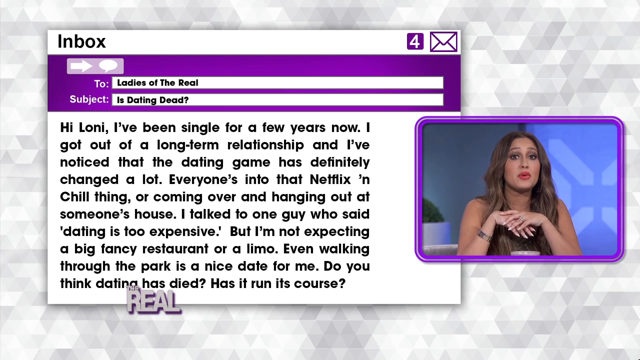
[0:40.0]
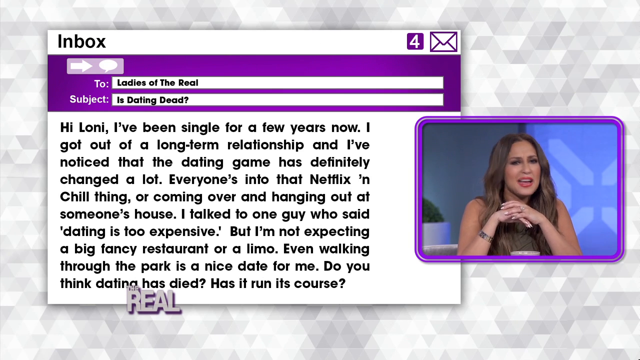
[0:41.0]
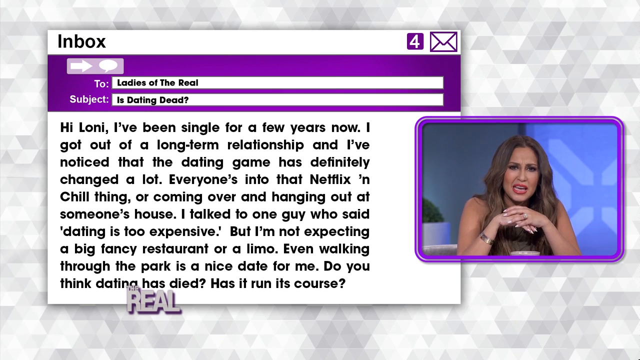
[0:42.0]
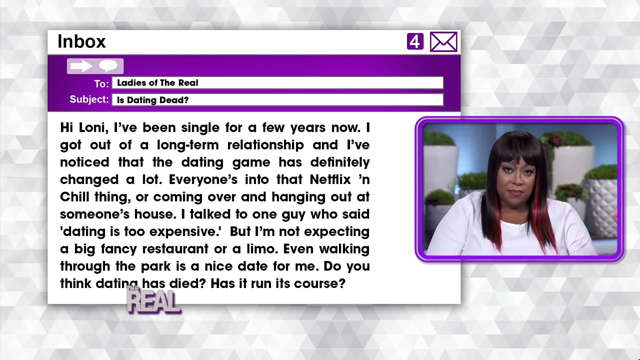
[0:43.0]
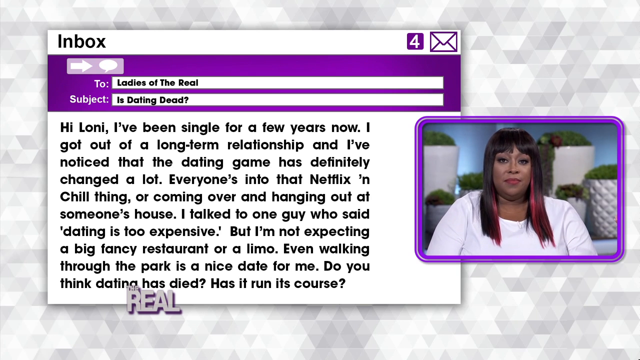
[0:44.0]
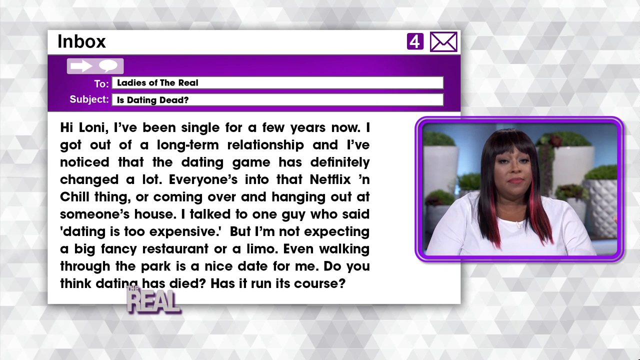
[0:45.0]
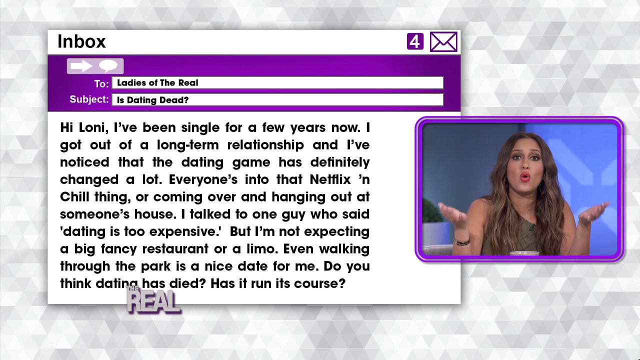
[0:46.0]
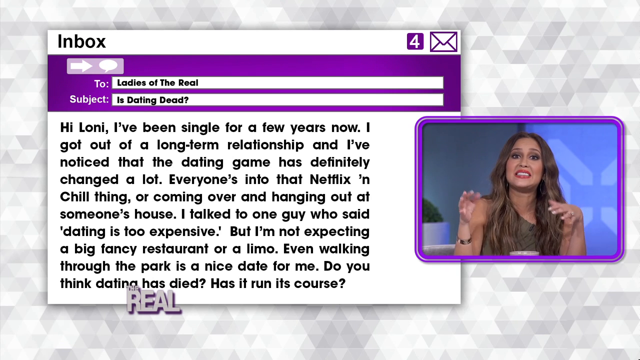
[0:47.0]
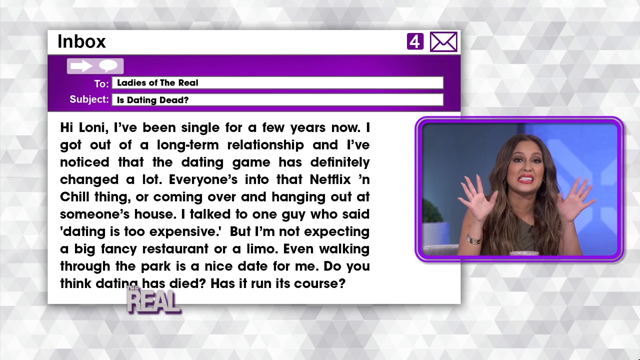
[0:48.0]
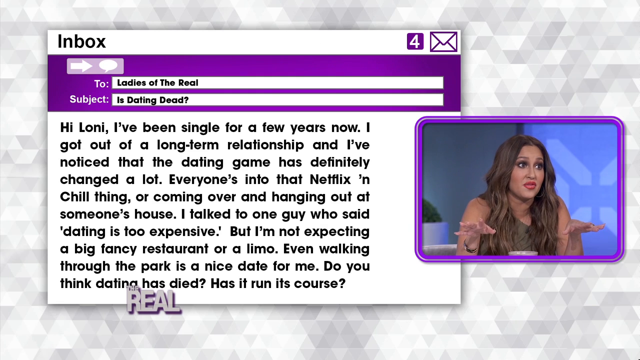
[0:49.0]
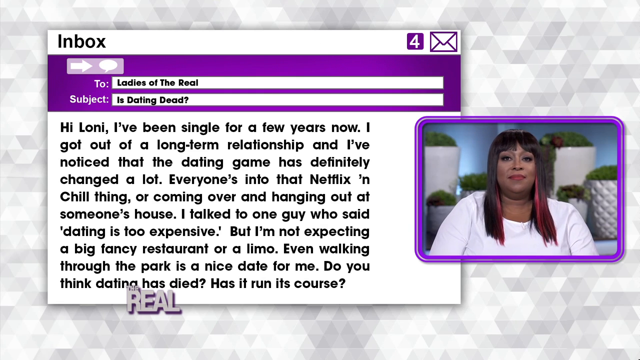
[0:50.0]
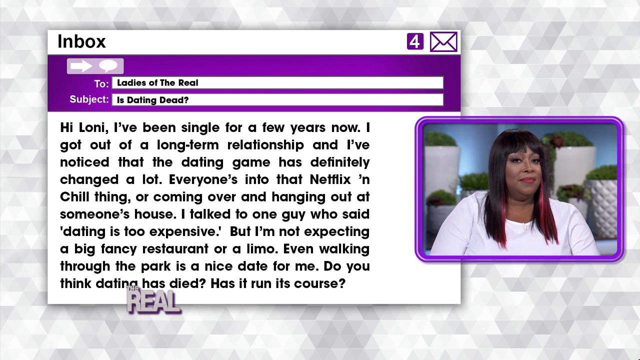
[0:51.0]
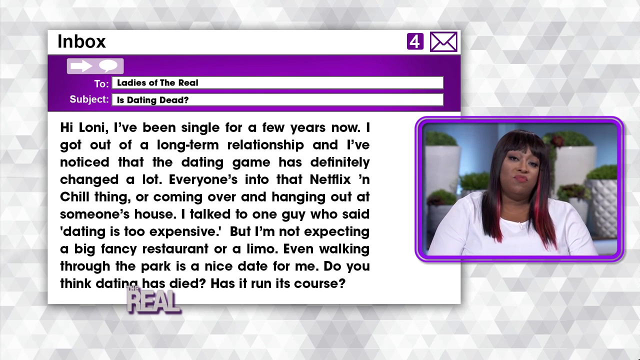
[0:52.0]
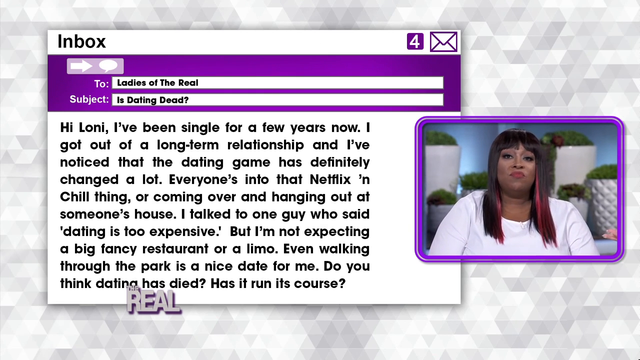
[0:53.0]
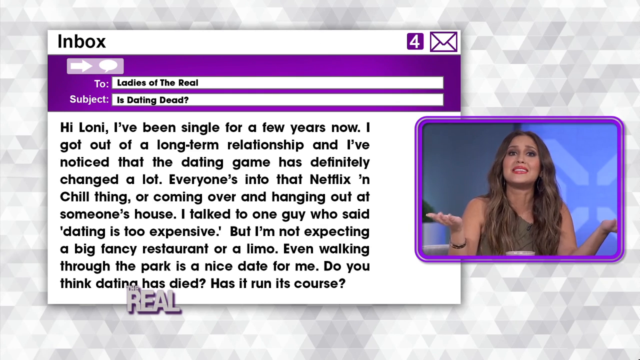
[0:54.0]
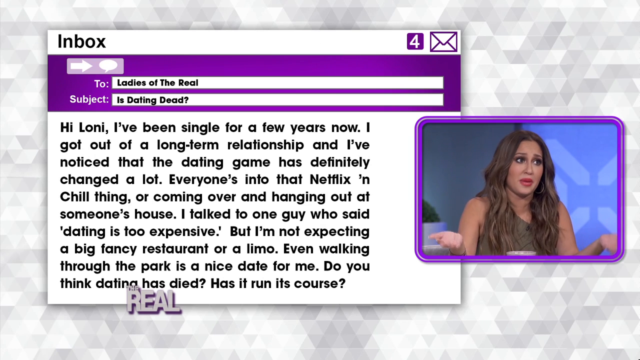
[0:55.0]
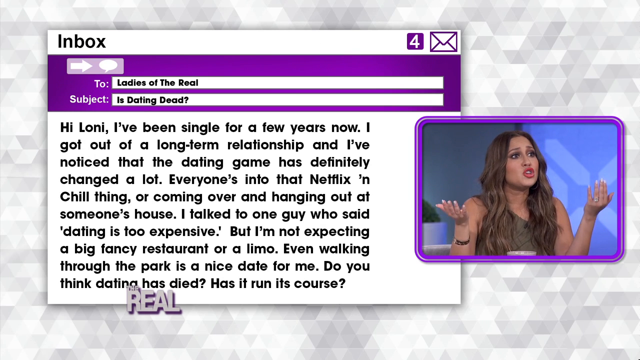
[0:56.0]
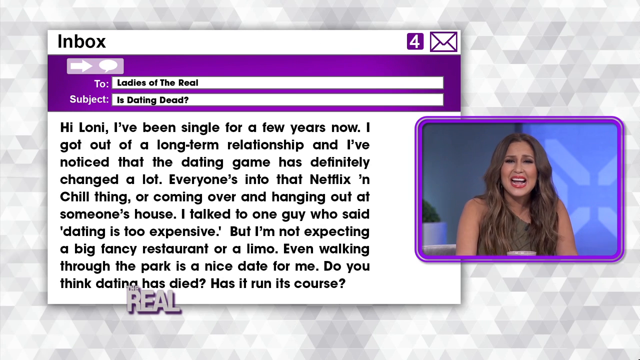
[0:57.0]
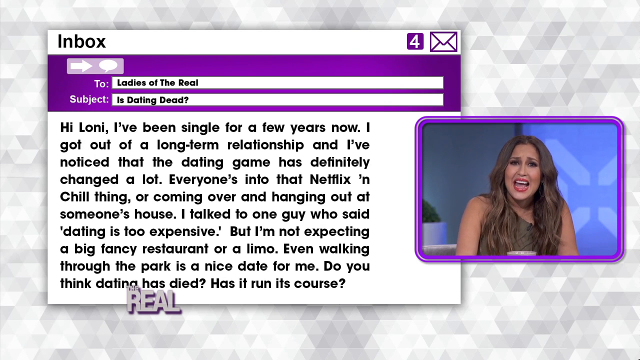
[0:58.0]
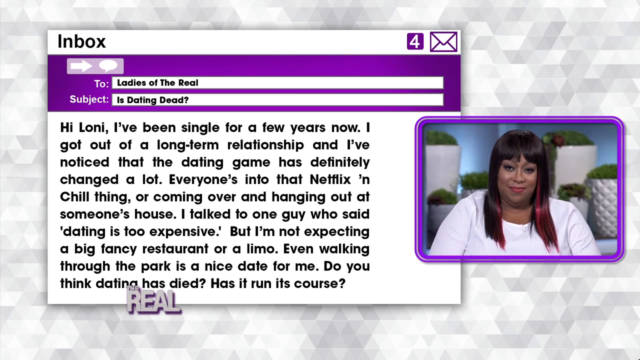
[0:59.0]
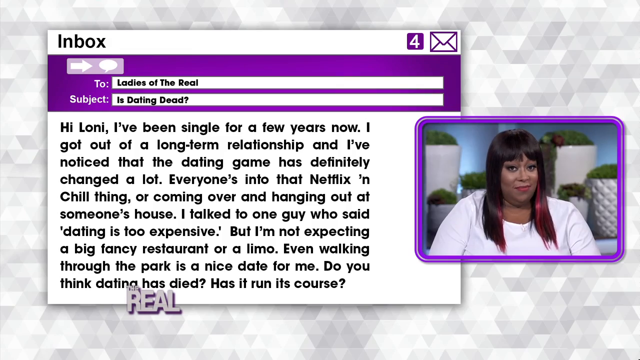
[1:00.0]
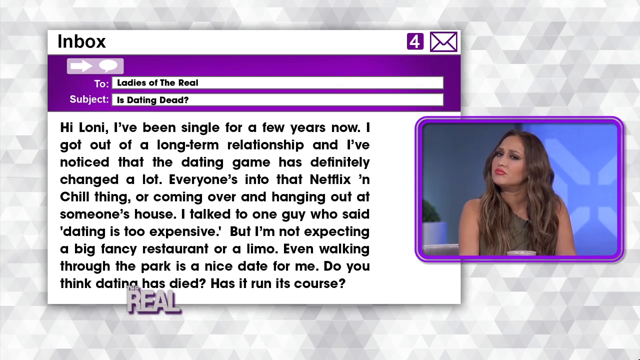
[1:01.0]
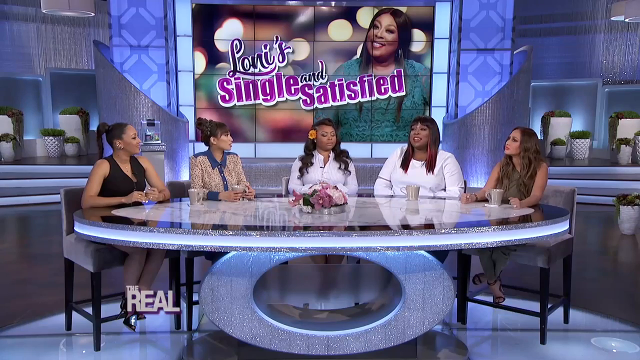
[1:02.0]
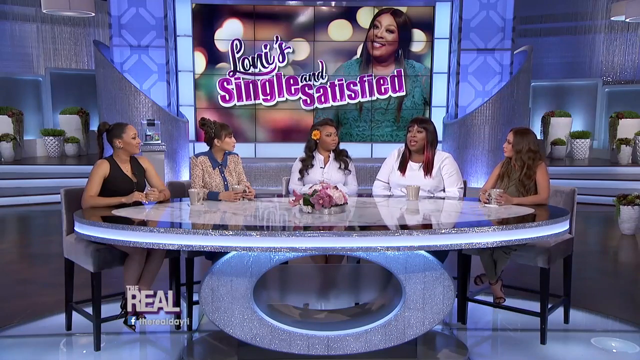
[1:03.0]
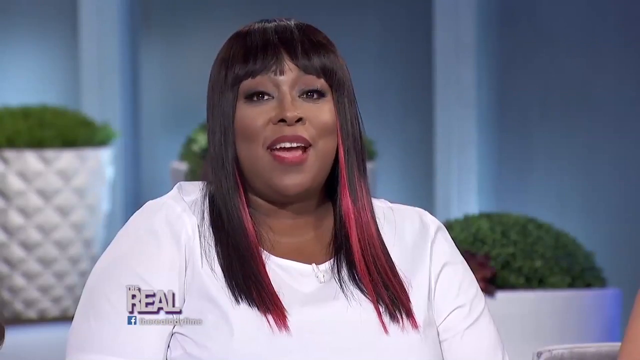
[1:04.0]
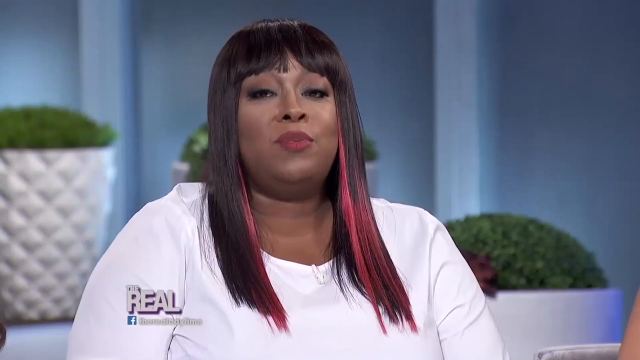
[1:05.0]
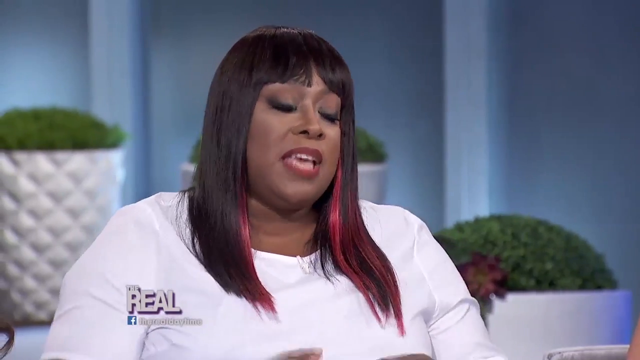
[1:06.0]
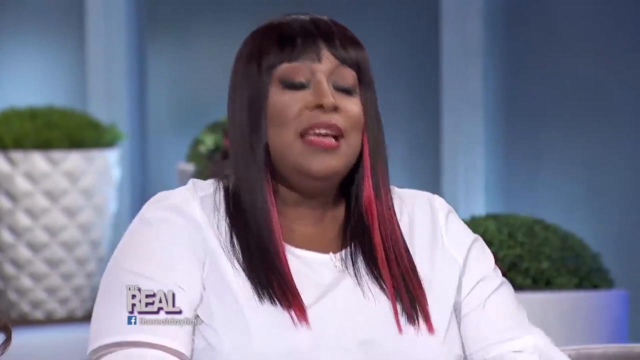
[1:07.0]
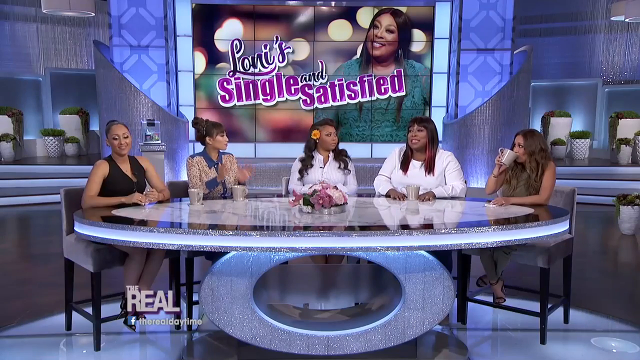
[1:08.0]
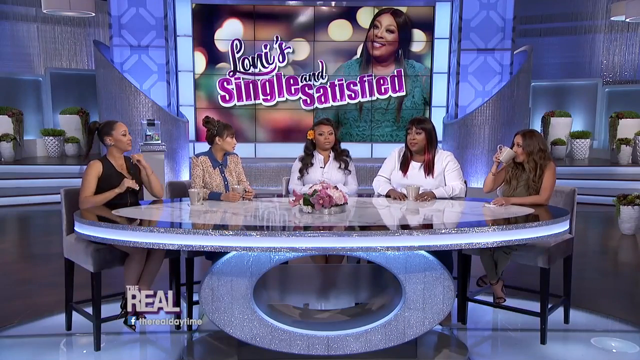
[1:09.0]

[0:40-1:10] A smaller video feed of the woman with the curly, wavy brown hair is on the right side of the screen, and she speaks very animatedly, directly to the camera. The other woman, with straight black hair and a long-sleeve white shirt, is shown. It goes back to the woman with the wavy brown hair, who speaks with a very expressive face and moves her hands; for example, she points her hands up toward the ceiling as if saying "I don't know", then makes an expression of worry or thought. All five women are then shown sitting at the table. The shot zooms in on just the woman with the straight black hair and pink highlights as she speaks, and then shows all five women, who are speaking to each other.